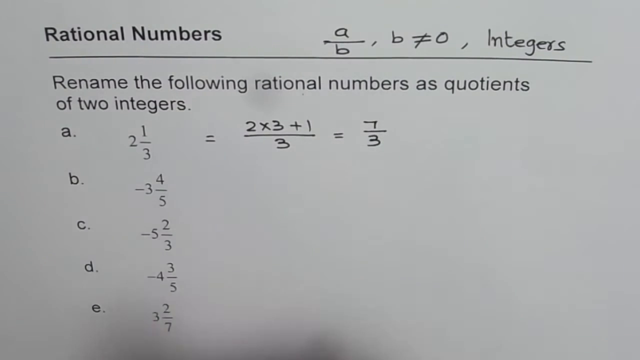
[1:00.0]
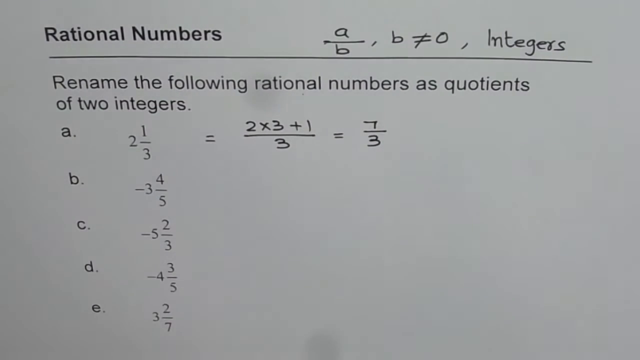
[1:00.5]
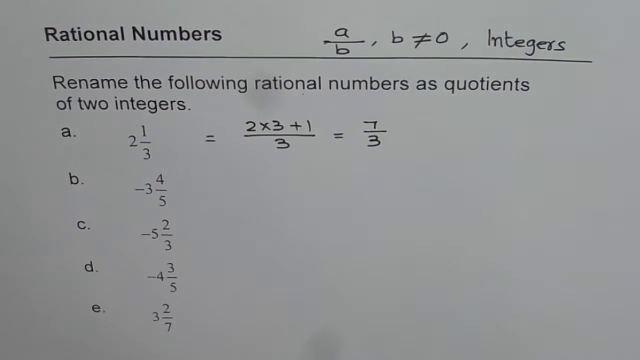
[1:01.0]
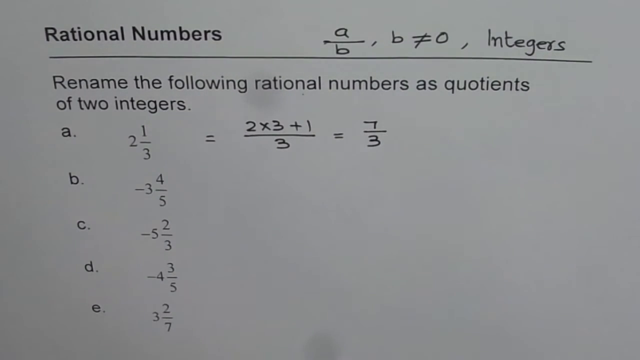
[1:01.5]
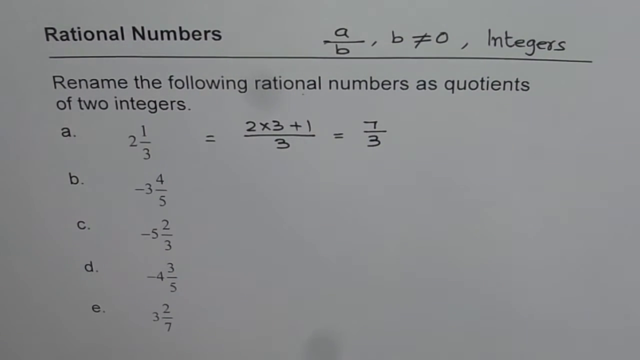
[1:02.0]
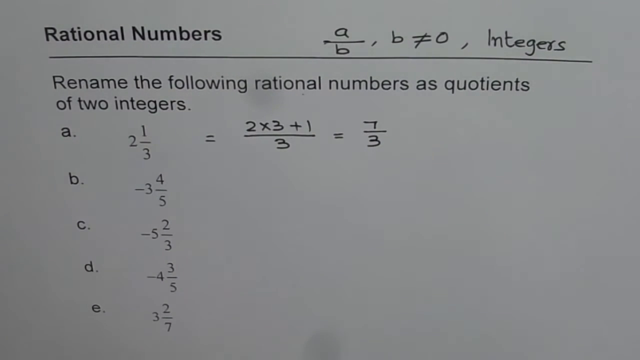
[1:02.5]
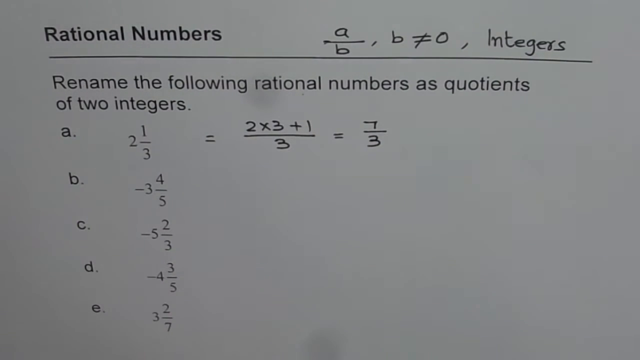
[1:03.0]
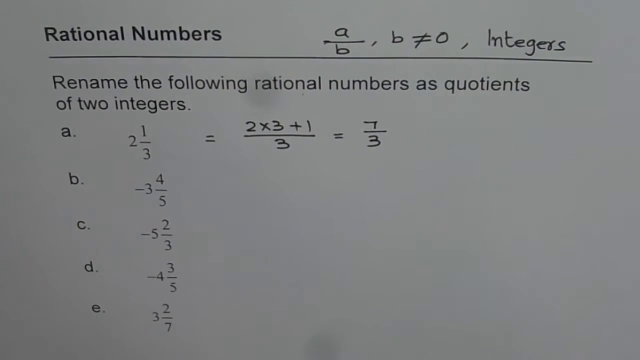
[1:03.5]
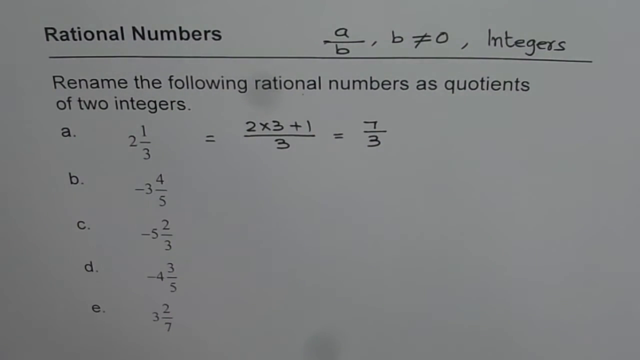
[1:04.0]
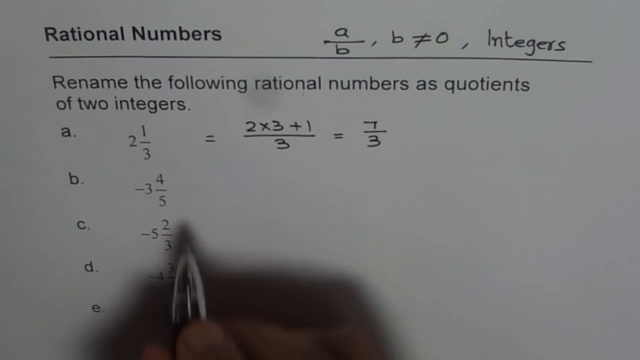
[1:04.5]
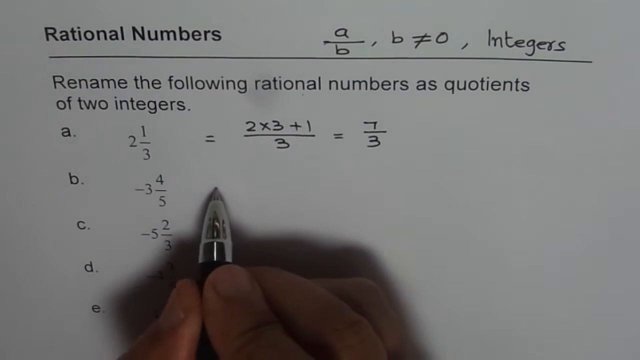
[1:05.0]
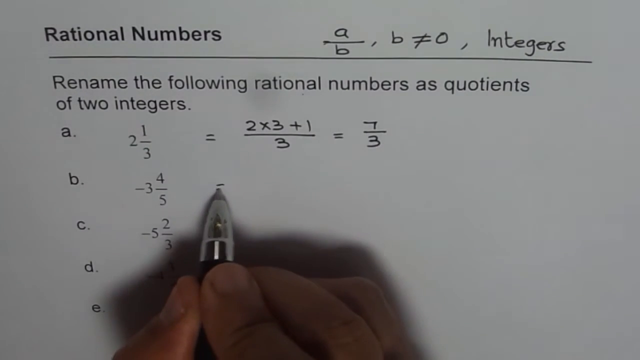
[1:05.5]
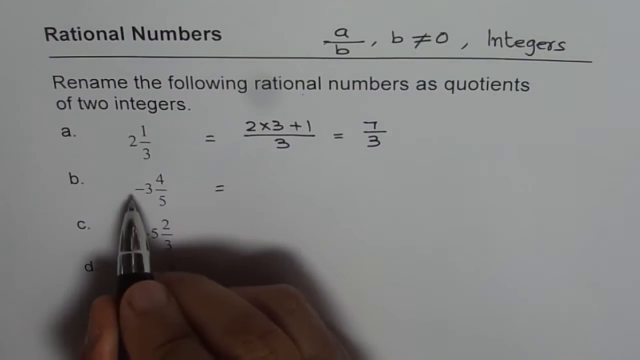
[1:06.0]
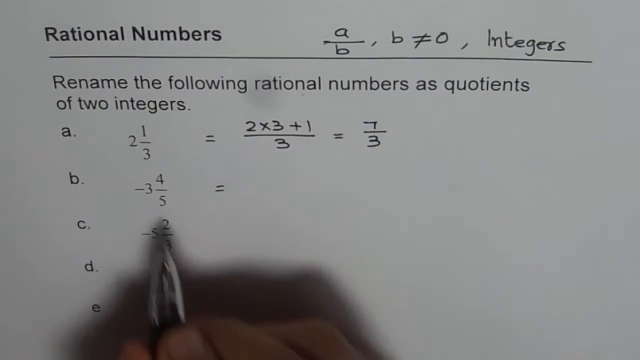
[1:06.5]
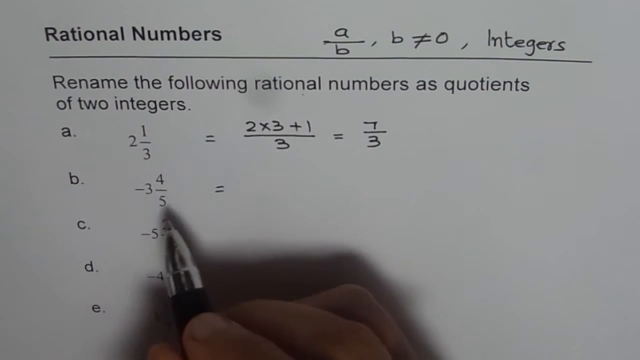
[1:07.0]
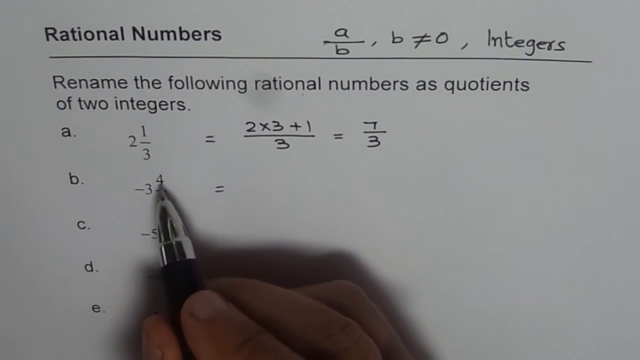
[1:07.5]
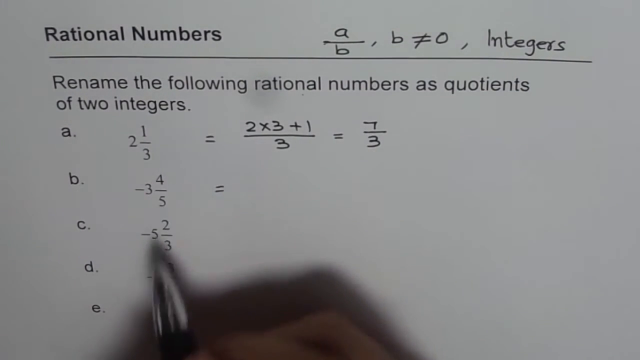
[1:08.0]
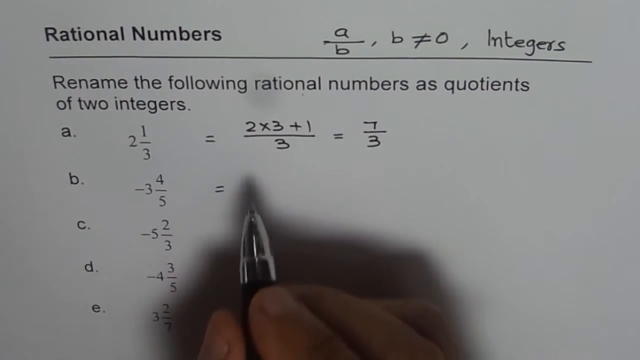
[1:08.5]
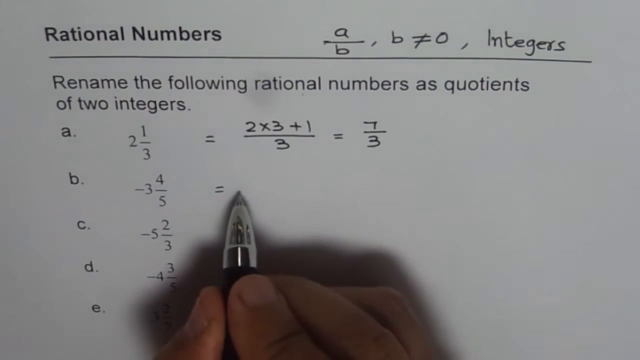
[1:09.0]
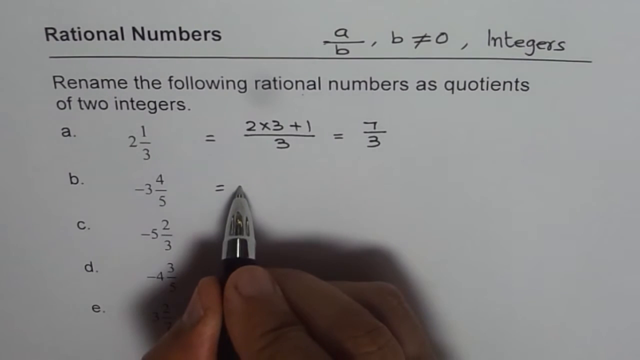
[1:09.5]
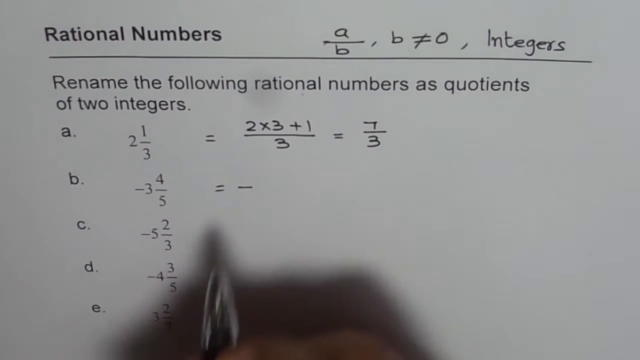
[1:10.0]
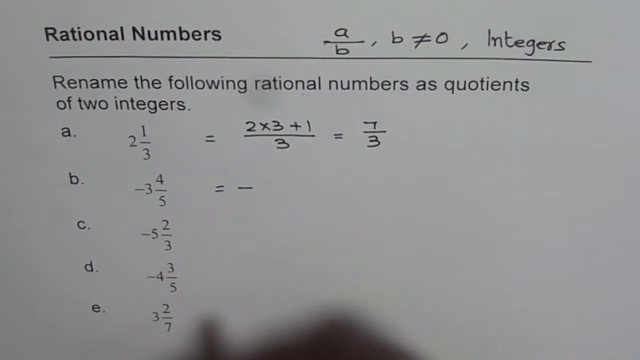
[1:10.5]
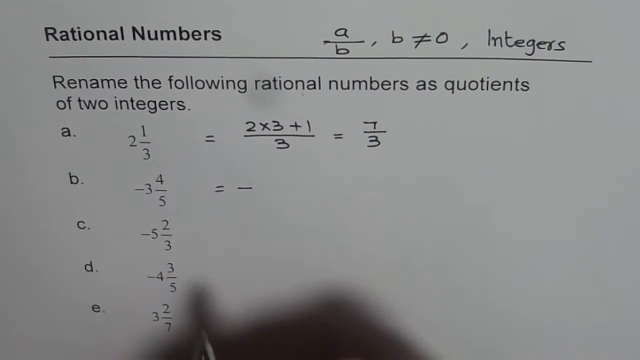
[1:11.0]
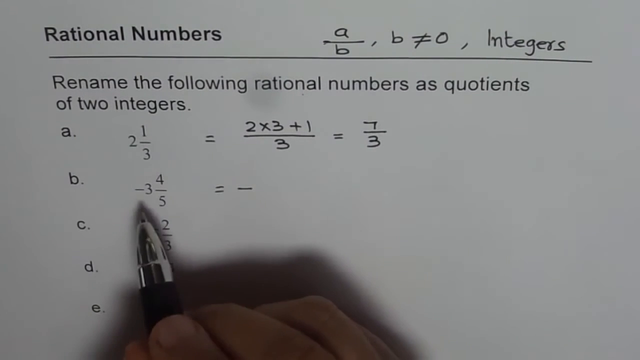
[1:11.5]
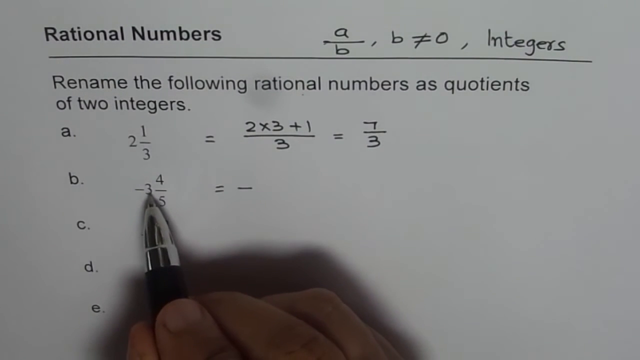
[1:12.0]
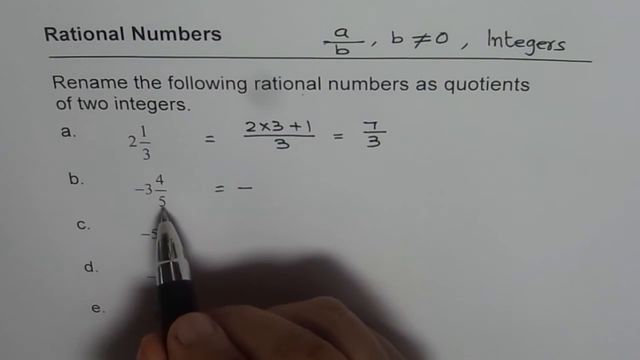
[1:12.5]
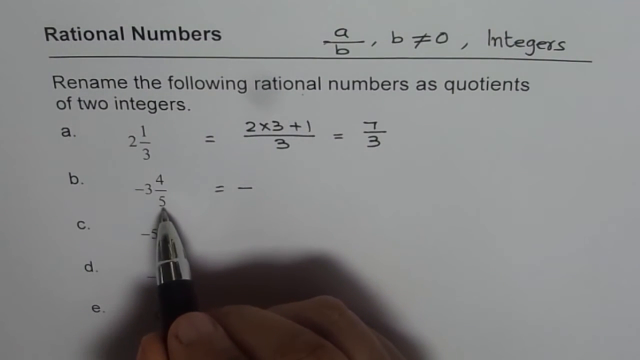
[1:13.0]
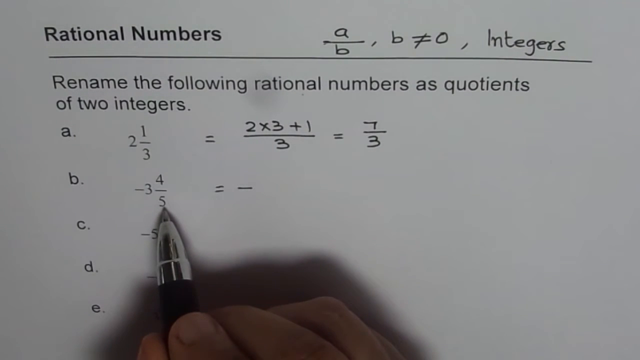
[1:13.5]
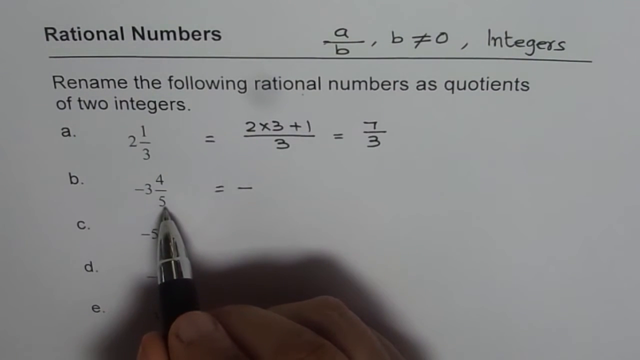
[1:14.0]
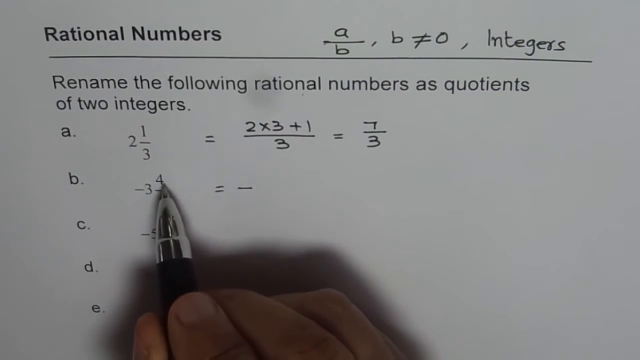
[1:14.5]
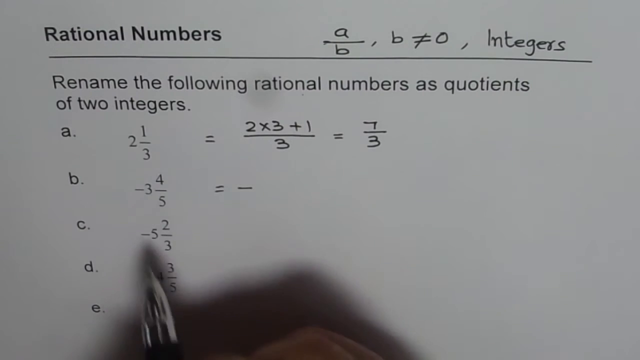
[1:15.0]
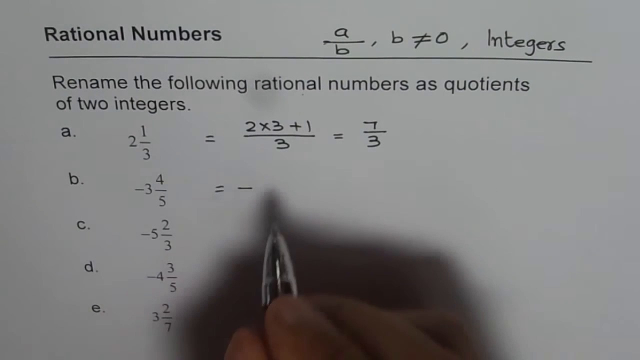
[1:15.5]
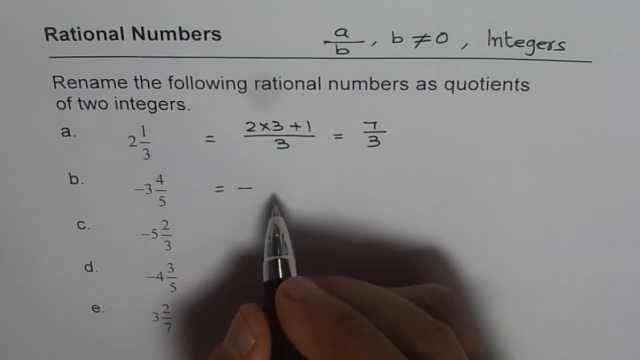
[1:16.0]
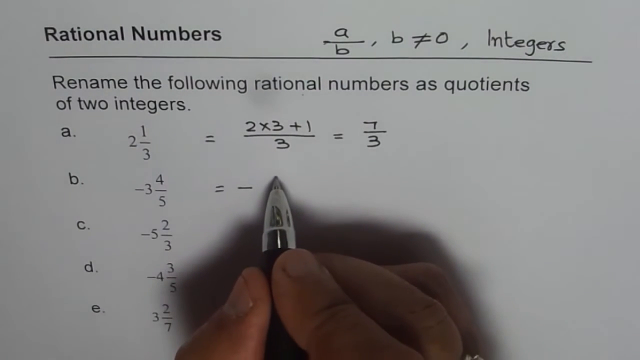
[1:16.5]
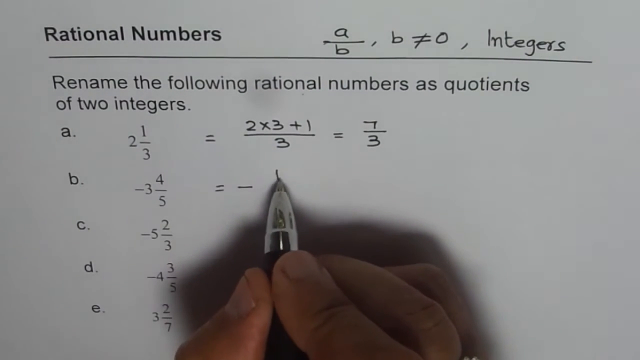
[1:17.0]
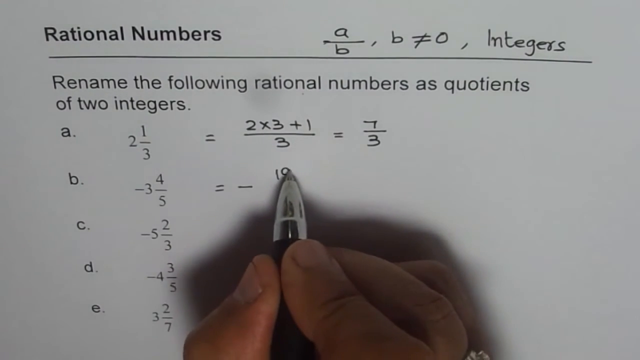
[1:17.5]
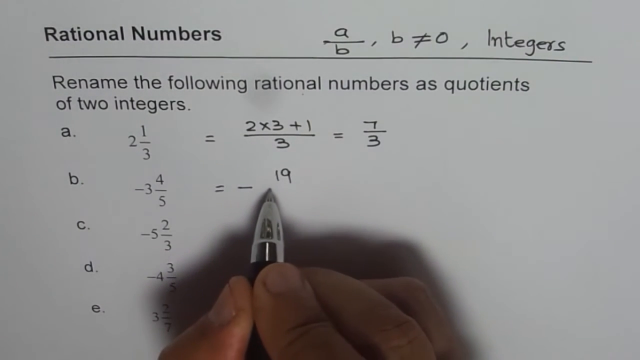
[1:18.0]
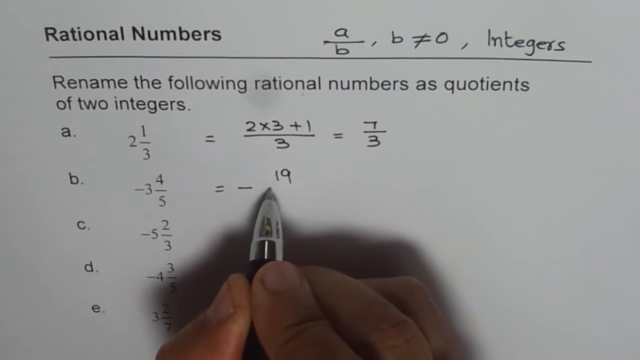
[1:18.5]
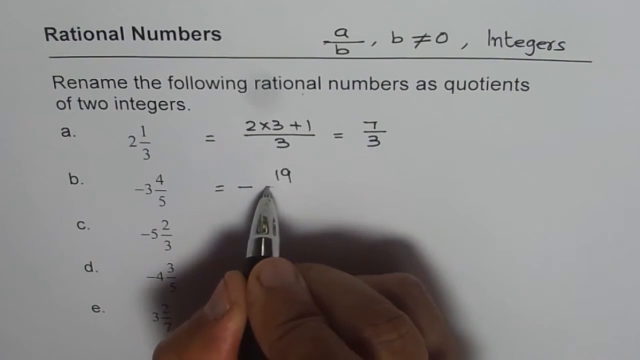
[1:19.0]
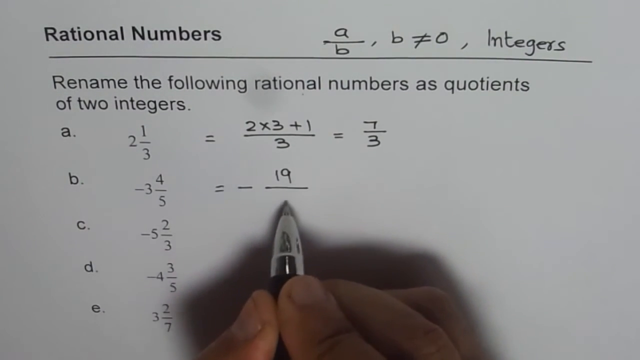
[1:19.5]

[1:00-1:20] After a brief pause showing the entire page with the math question and the five options, with the camera angle unchanged, the hand is initially not visible. The hand holding the pen then enters the frame from the bottom and begins working on option B. It writes an equals sign, refers back to option B, -3 and 4/5, and points the pen at various parts of it. In the blank area beside option B it starts writing "-19" over a fraction line, and then the video briefly pauses.